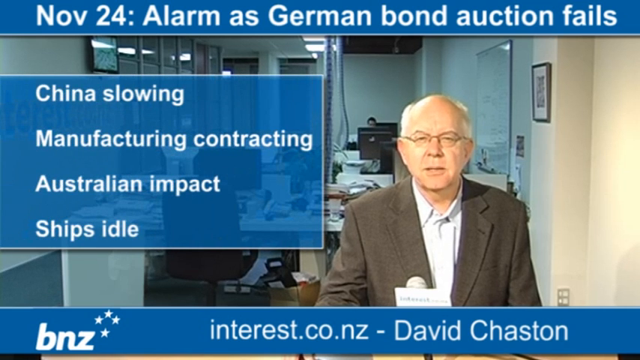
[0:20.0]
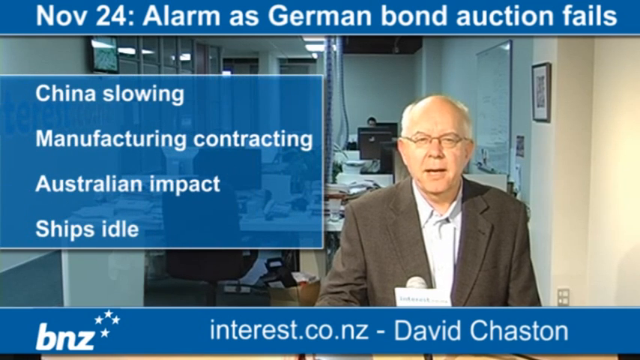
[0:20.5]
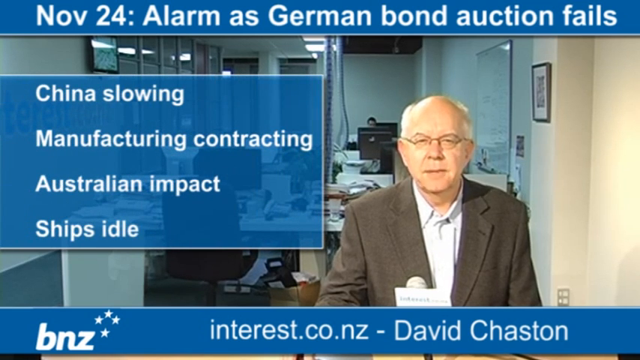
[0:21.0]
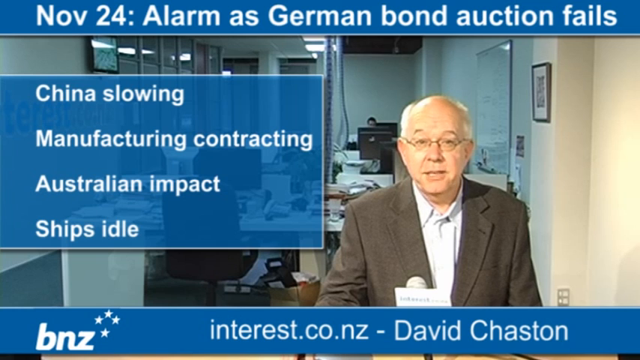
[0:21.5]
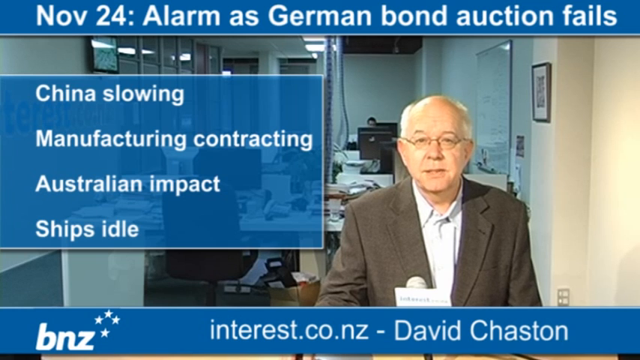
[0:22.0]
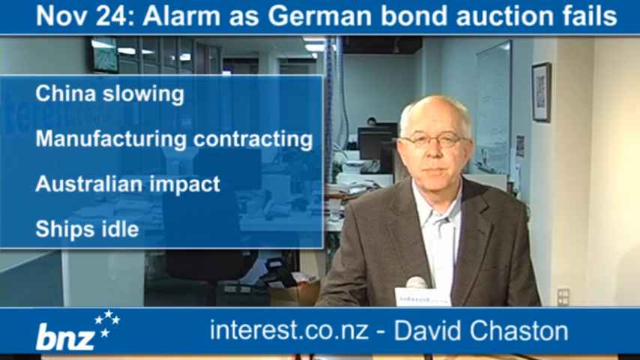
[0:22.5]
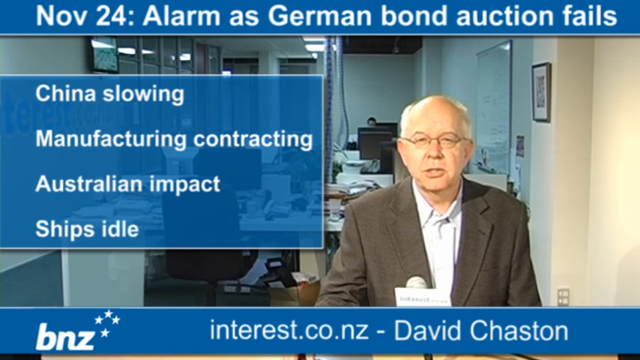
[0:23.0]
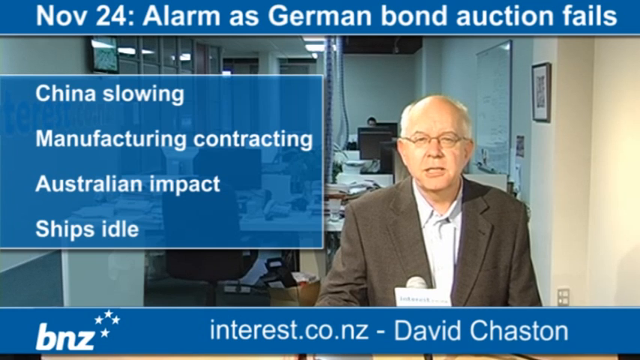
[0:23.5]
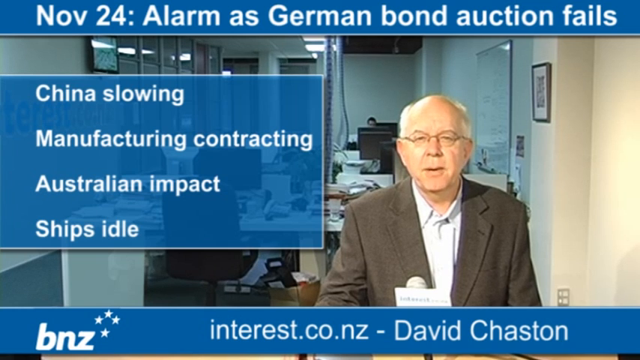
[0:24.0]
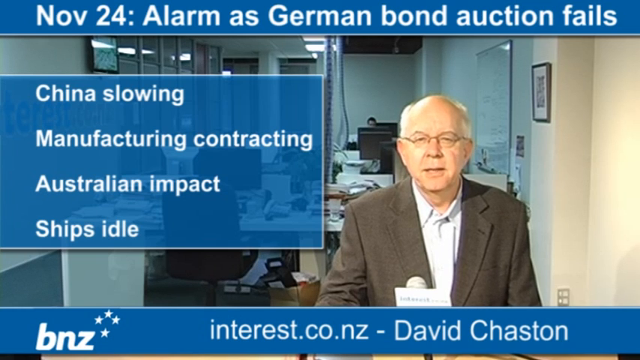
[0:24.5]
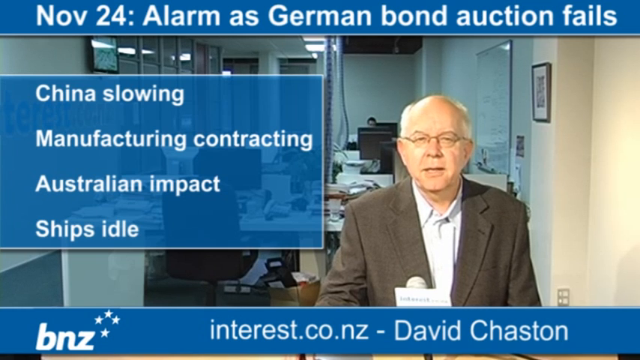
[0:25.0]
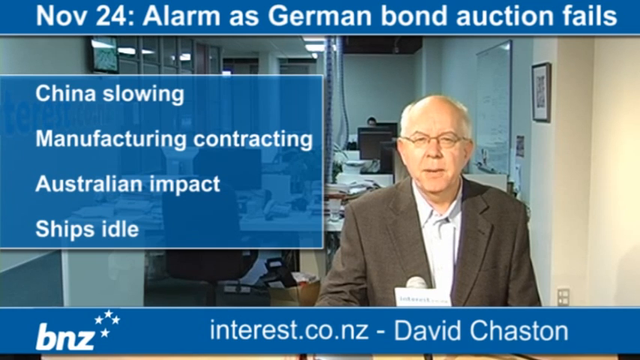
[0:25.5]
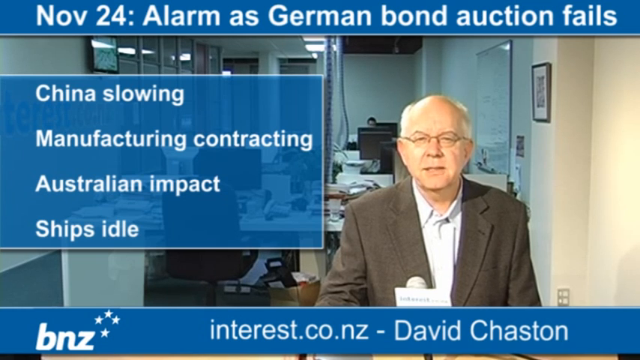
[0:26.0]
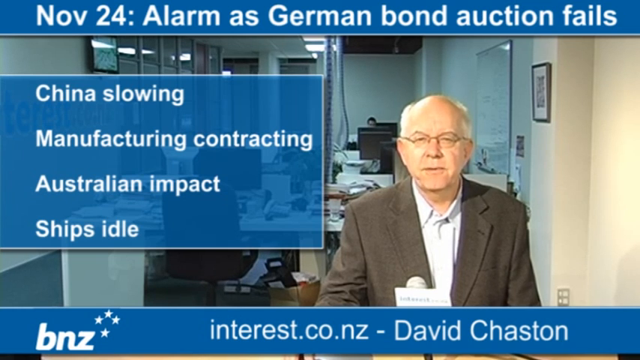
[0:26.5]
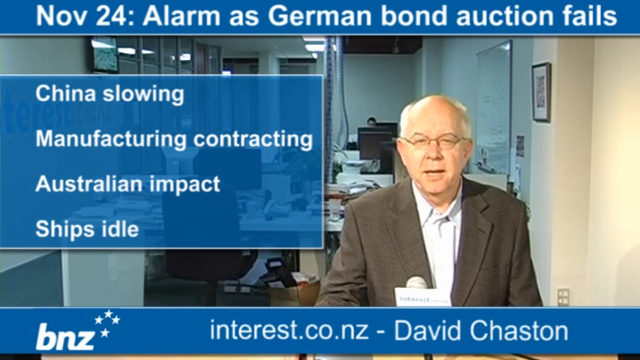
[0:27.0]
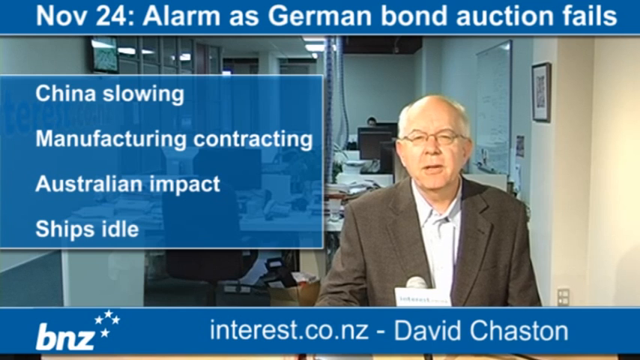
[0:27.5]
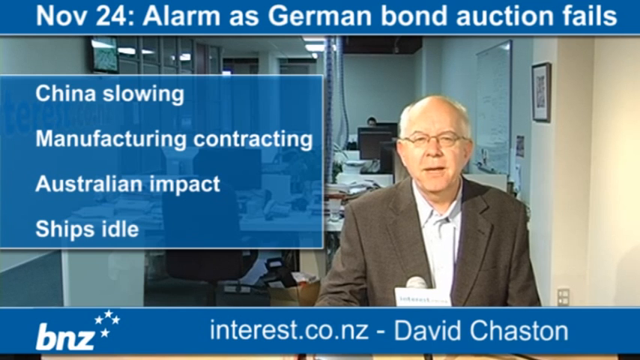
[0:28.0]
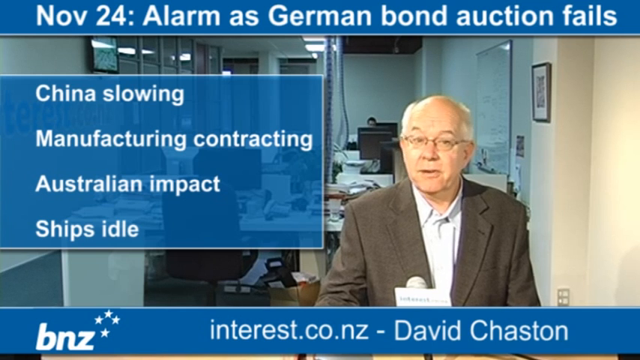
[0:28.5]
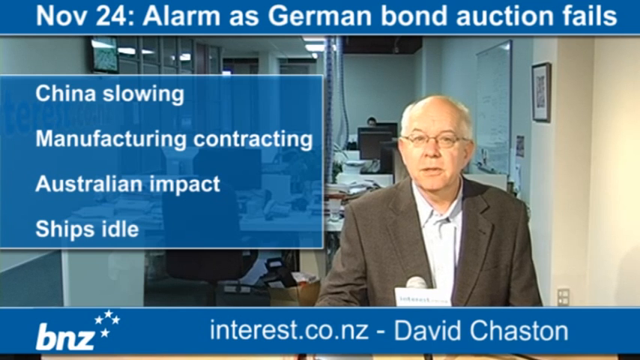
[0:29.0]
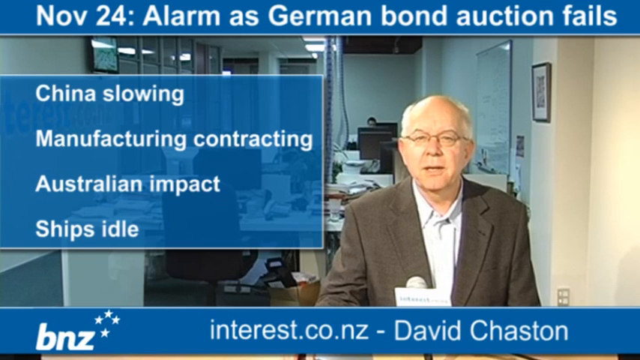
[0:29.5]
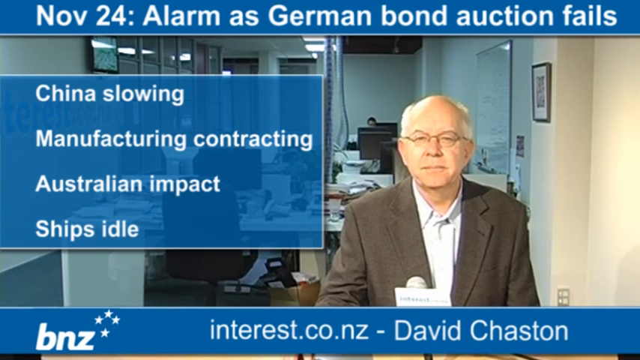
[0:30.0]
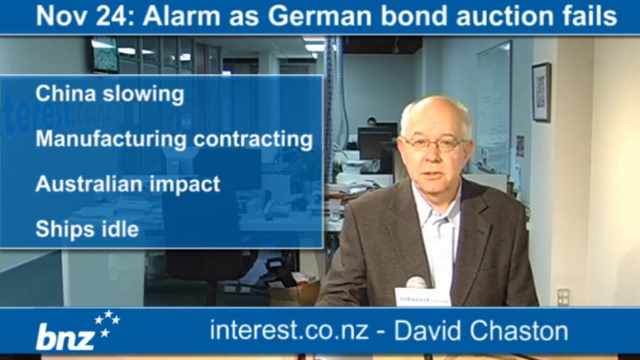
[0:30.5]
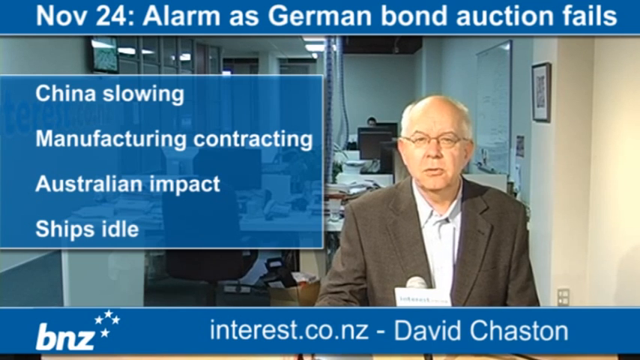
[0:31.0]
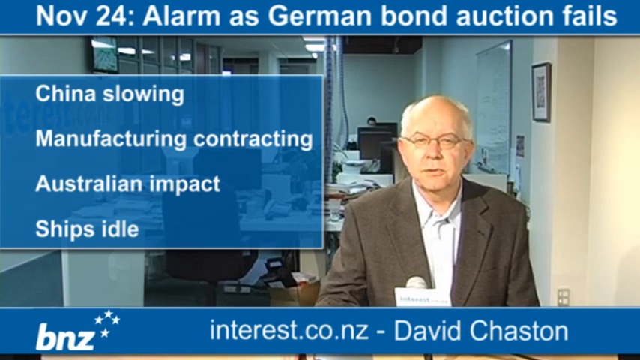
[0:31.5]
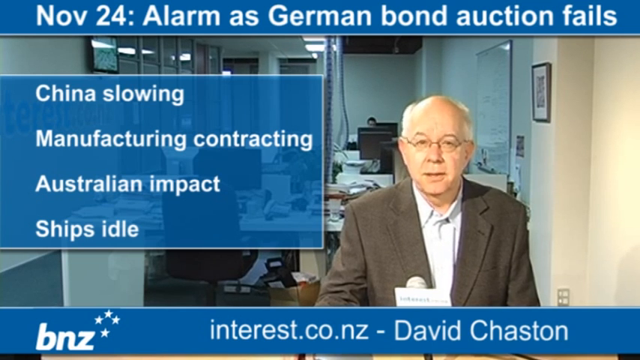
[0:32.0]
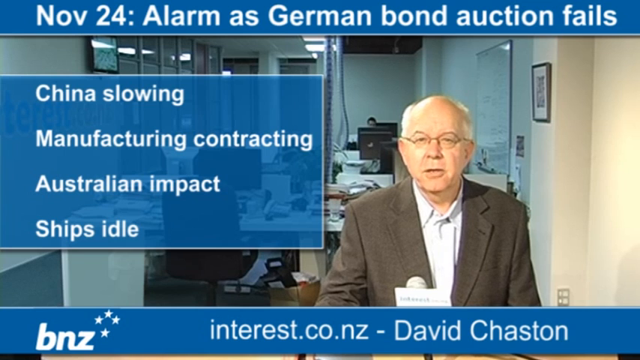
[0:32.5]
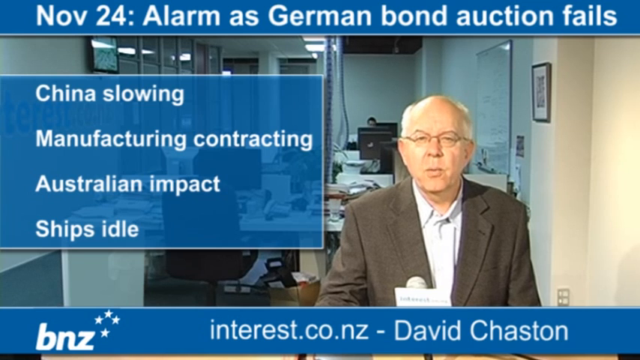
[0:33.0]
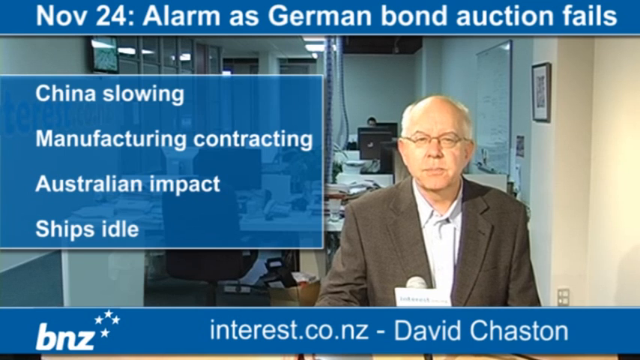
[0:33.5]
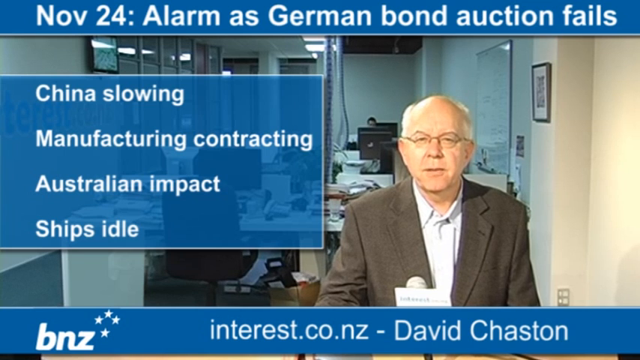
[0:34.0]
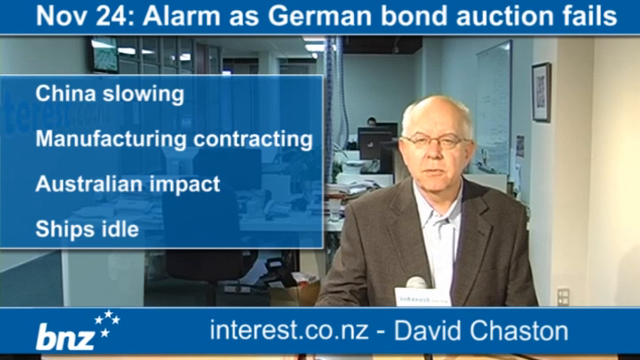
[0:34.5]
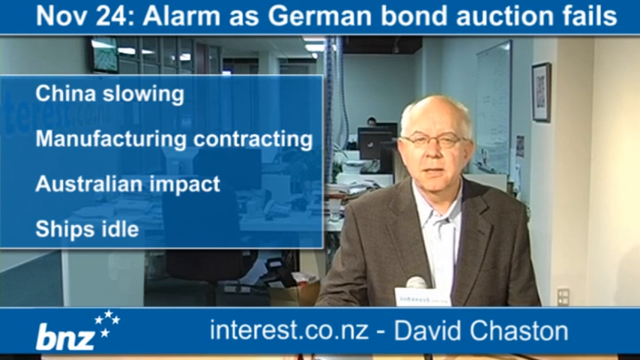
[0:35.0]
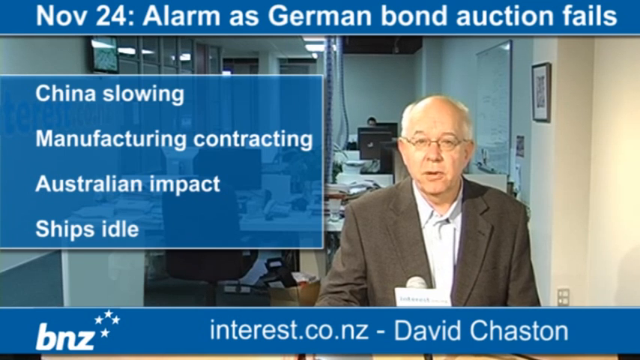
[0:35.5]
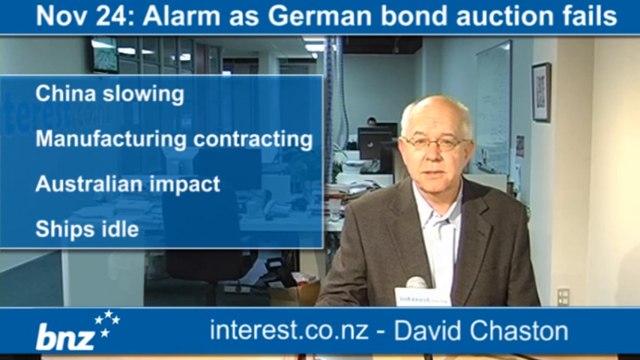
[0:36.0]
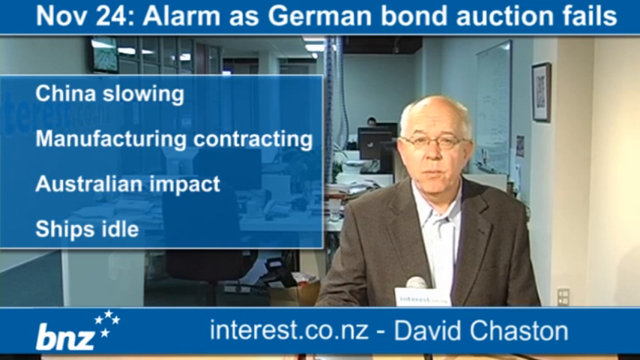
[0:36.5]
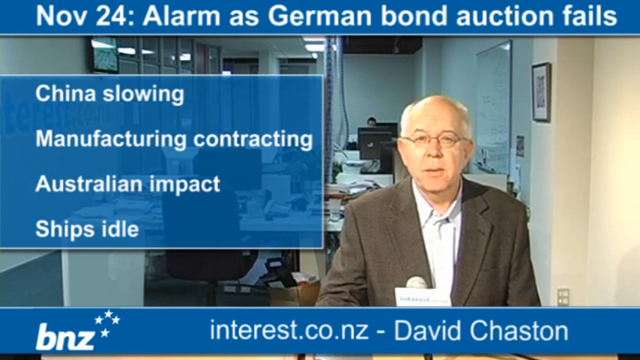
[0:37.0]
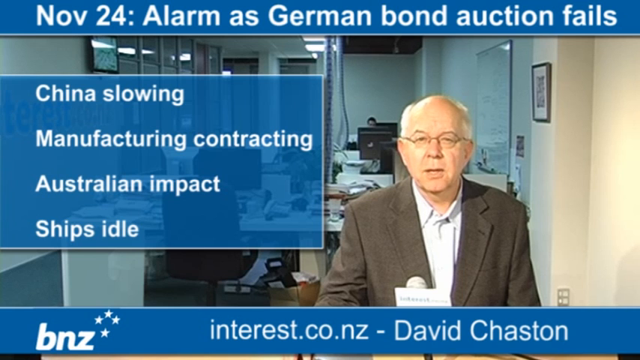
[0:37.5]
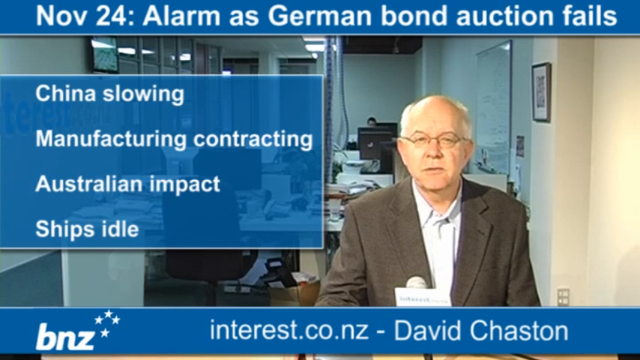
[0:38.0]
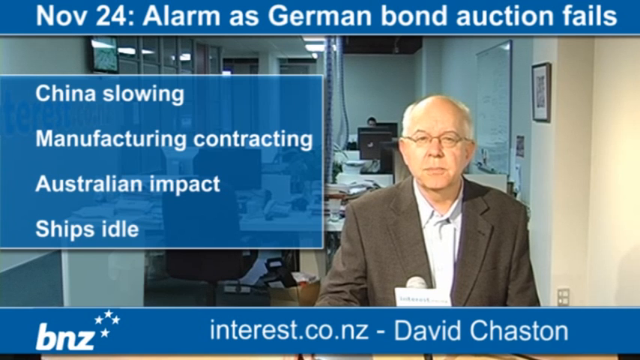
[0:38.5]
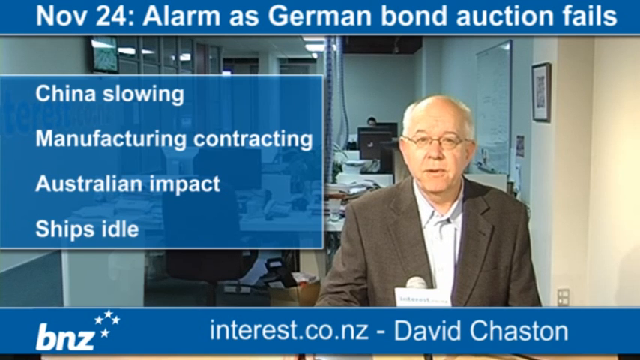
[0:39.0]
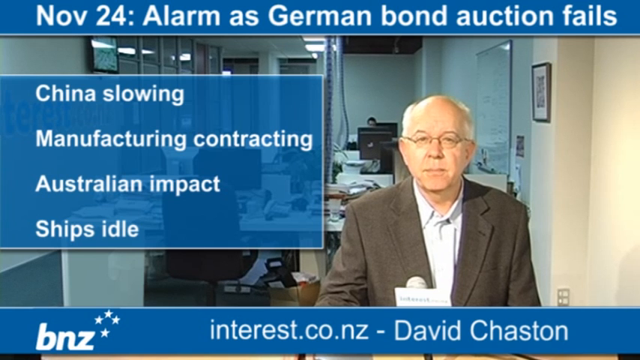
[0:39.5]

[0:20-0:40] On-screen text again shows "November 21st" along with "China slowing, manufacturing contracting, Australia impact, ships idle," with these subjects on the right of the man. An old man in a suit, named David, speaks into a mic while people in the background work at their desks. The room seems kind of dark and not well lit, and there are pictures on the walls. The production looks like something not done by a corporation or a big studio; it looks either old or badly made, like an independent news platform. Little else happens beyond the man speaking.